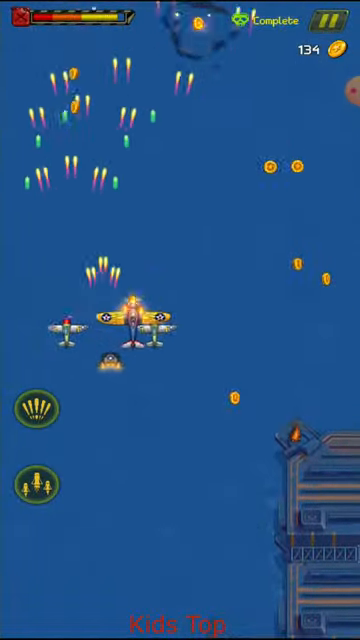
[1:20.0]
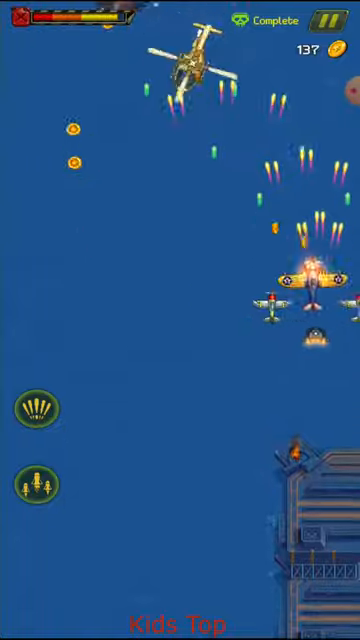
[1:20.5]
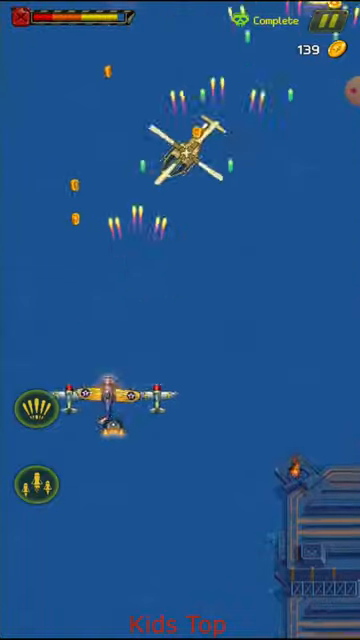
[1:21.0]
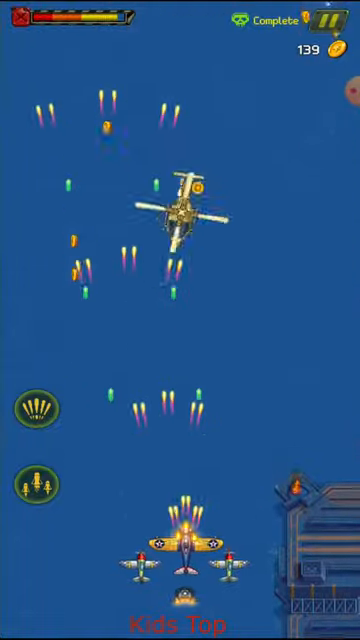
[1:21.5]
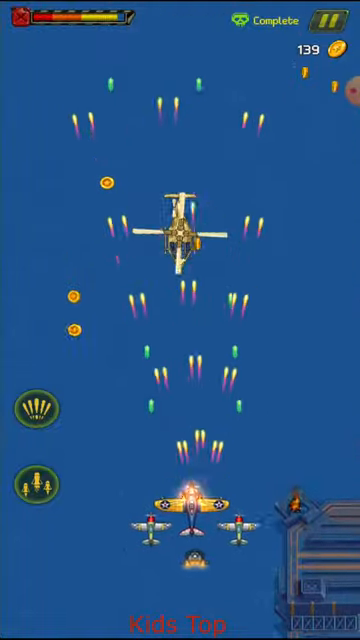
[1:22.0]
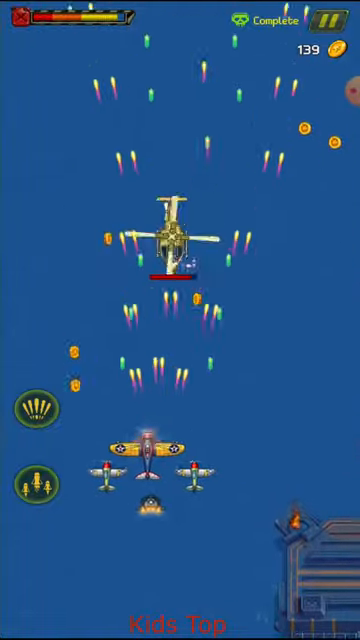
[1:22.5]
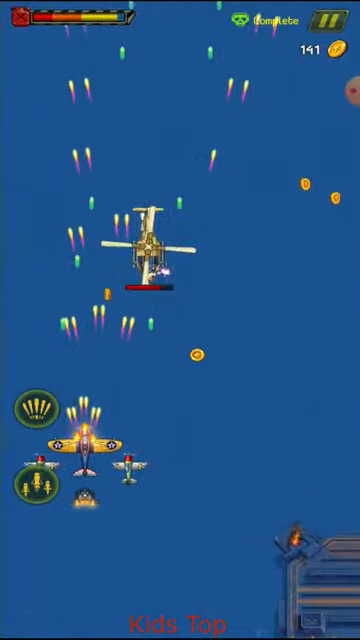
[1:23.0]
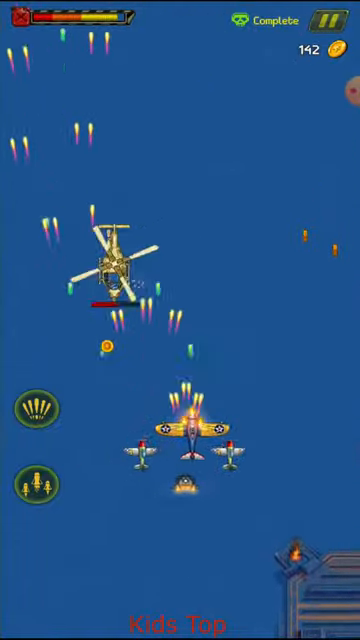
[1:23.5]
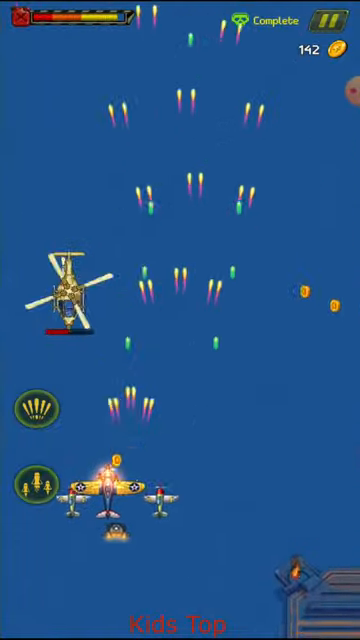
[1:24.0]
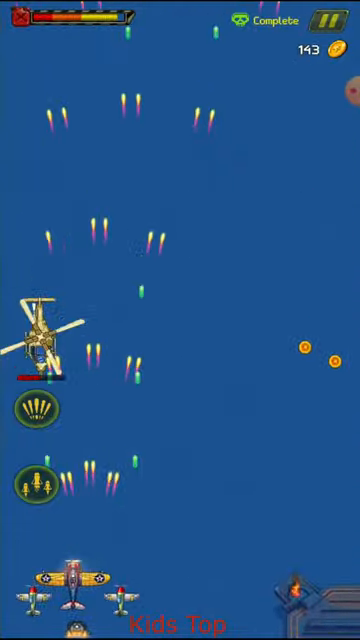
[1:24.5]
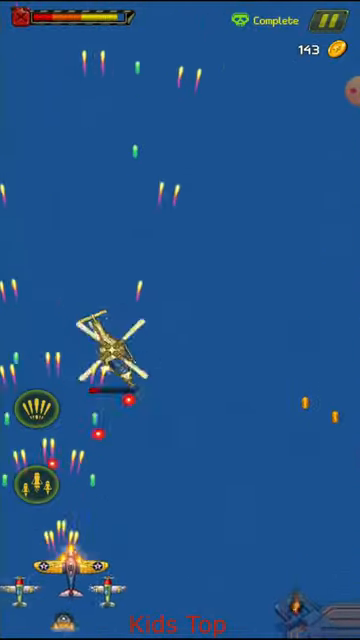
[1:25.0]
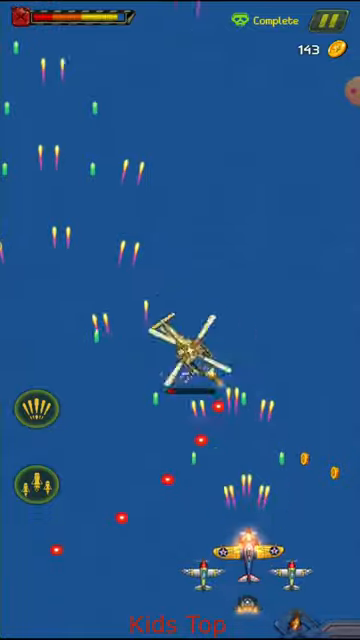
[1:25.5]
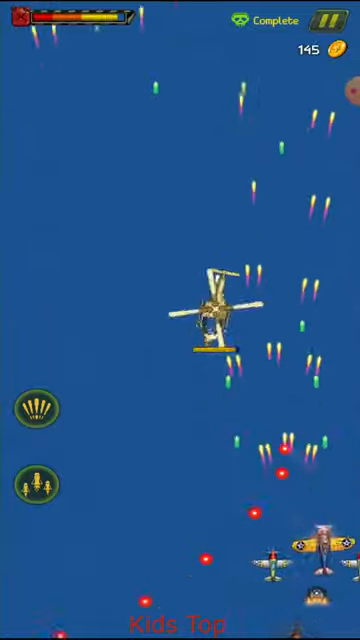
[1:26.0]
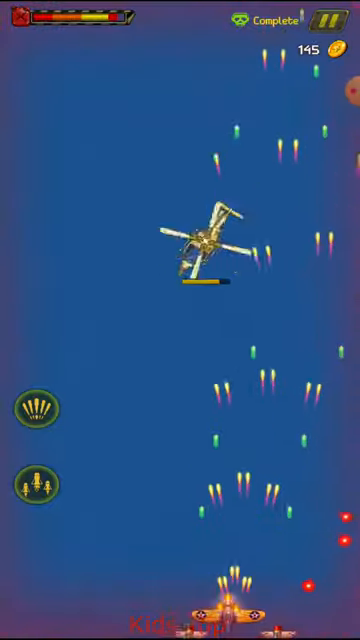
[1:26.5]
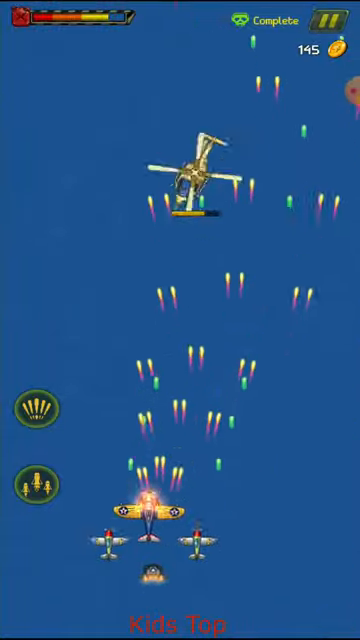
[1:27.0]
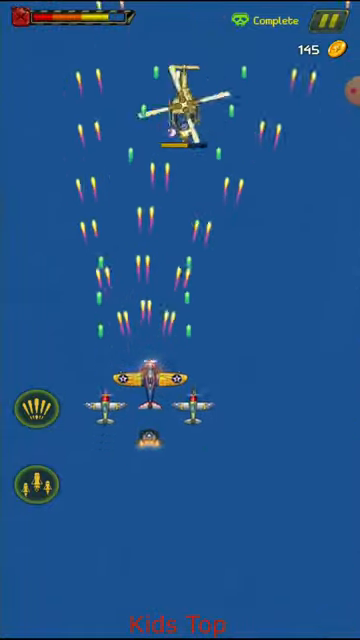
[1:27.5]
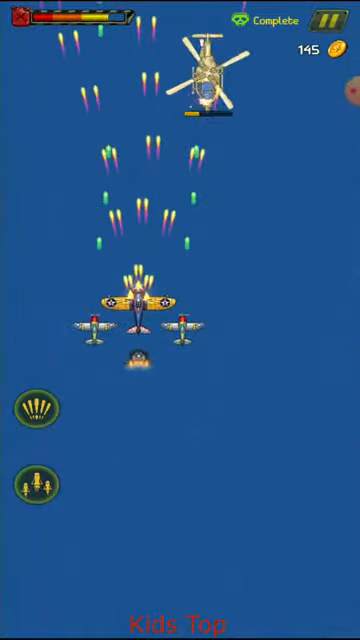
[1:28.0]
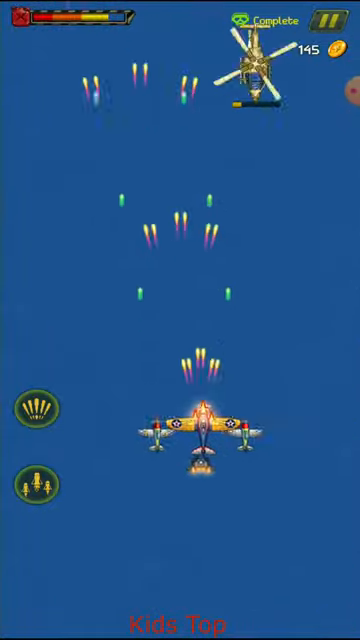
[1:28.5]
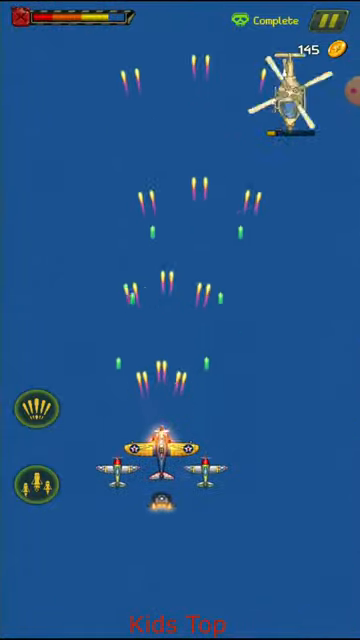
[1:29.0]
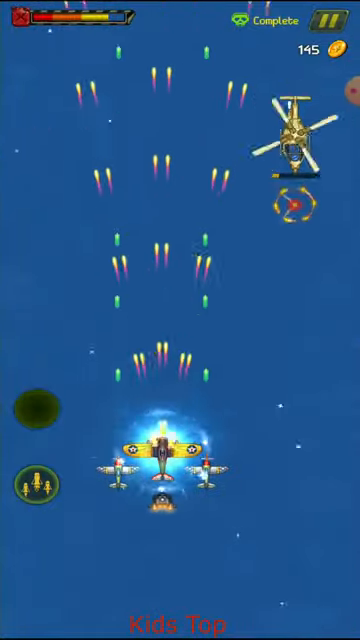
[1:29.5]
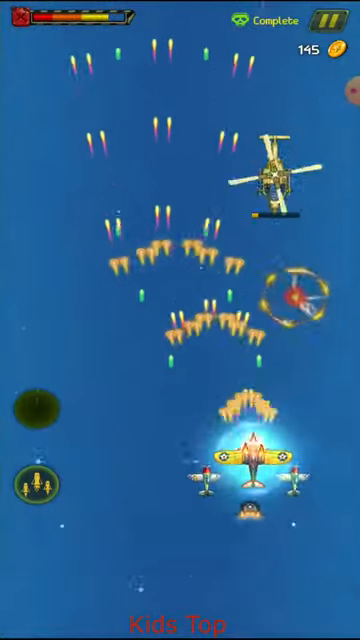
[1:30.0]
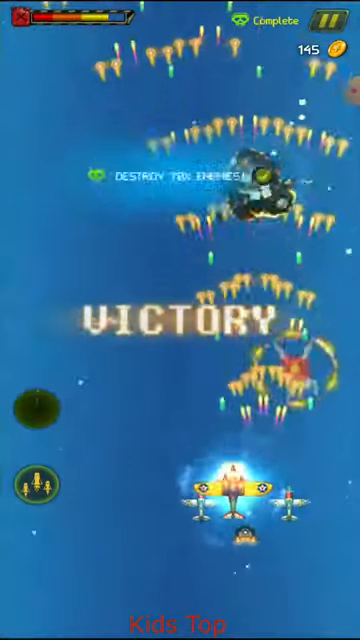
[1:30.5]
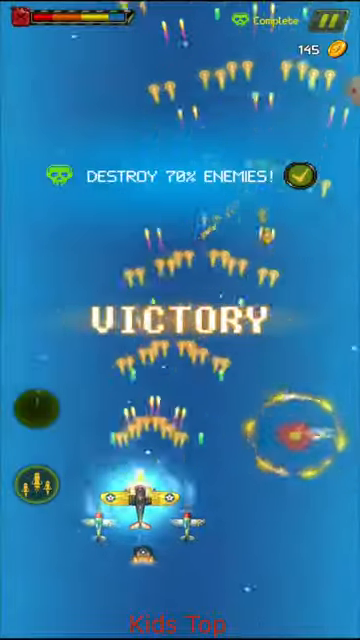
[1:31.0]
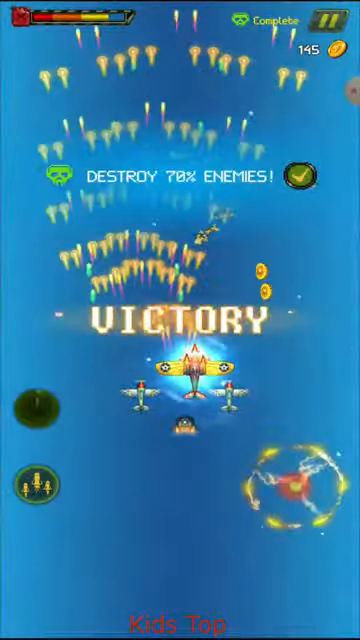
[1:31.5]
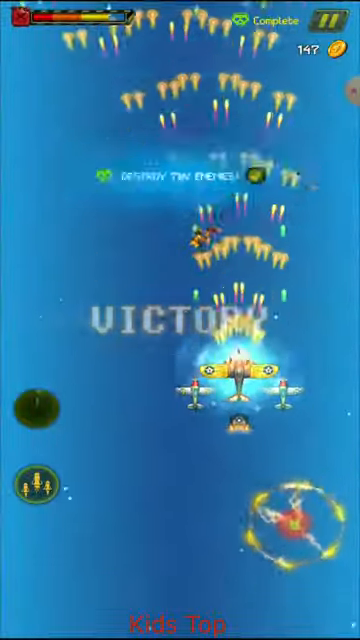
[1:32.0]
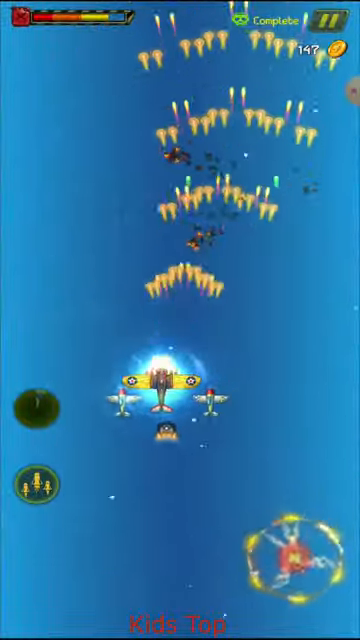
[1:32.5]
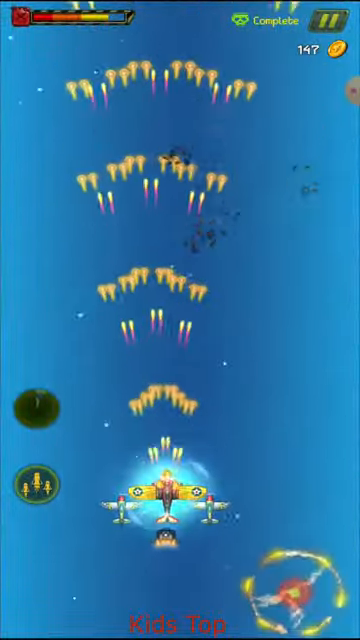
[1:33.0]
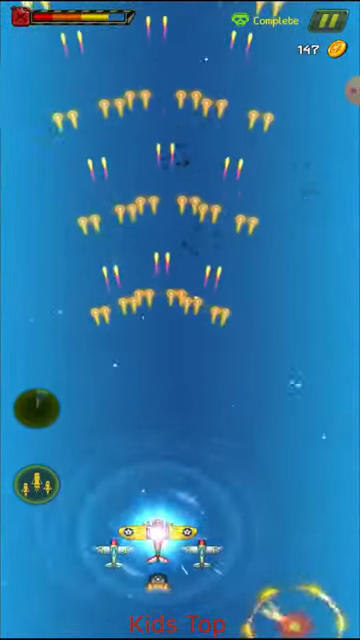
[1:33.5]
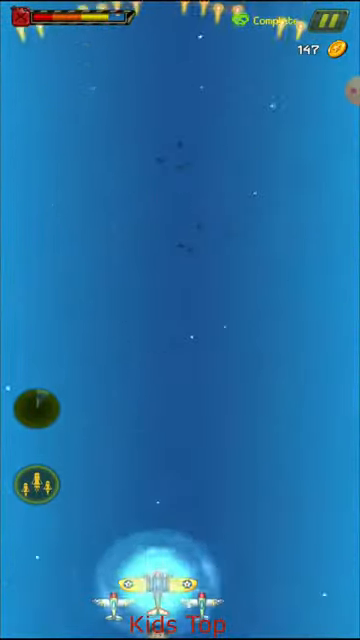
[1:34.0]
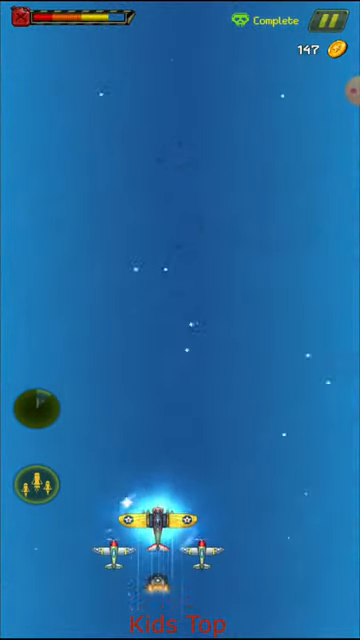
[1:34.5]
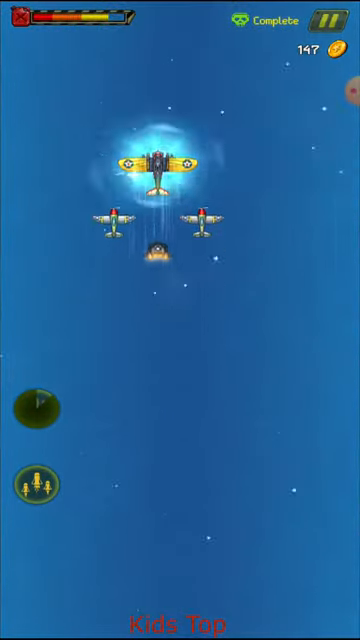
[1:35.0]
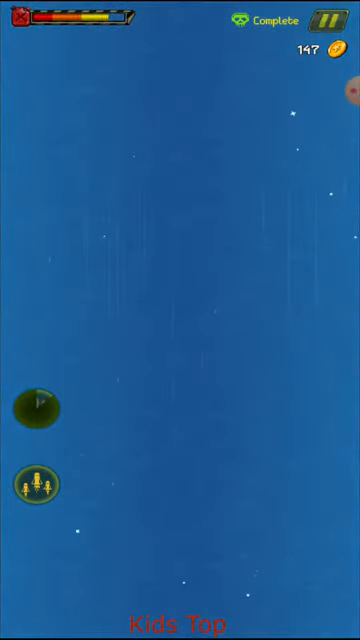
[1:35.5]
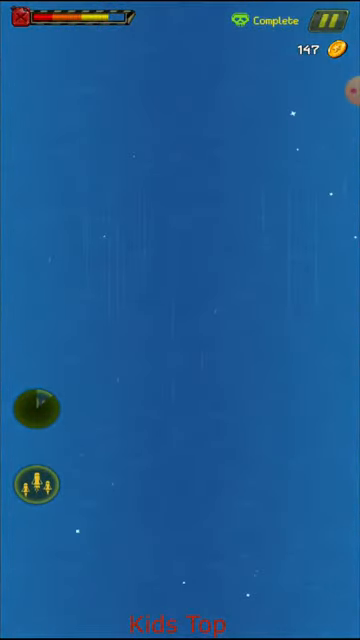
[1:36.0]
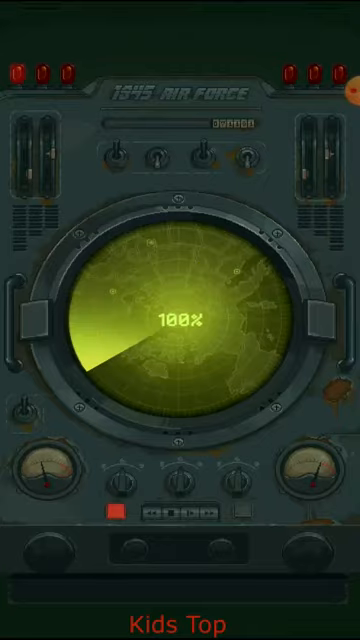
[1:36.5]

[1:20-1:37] In the bullet time sort of game, the player controls military fighter jets that fire lots of bullets and different weapons forward. The screen keeps moving up as the player avoids enemy fire and collects gold coins while destroying enemy jets, helicopters and other enemy objects. A health bar is in the top left corner, statistics in the top right show how many gold coins have been collected, and a few symbols on the left apparently show the kinds of guns the player is using. The fighter jets look like they are flying over an ocean, with some bases at the bottom, possibly enemy bases. A helicopter shows up and the player shoots it; it takes a while to beat. Once the player kills the helicopter, "Victory" appears on the screen, and the player keeps collecting things. Suddenly the player's jet shoots forward and goes to a different stage, and the screen changes to a radar screen that starts the process of finding a new stage.